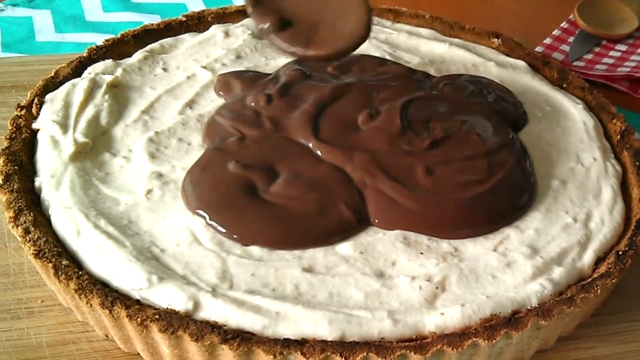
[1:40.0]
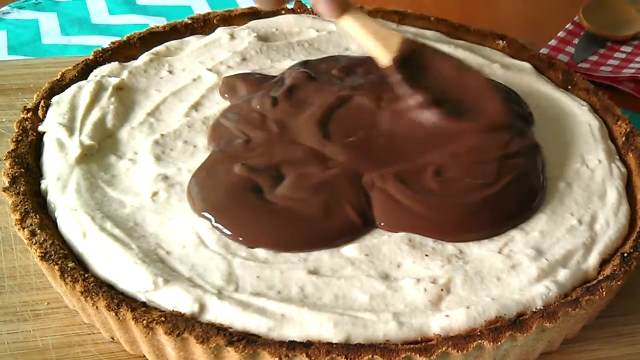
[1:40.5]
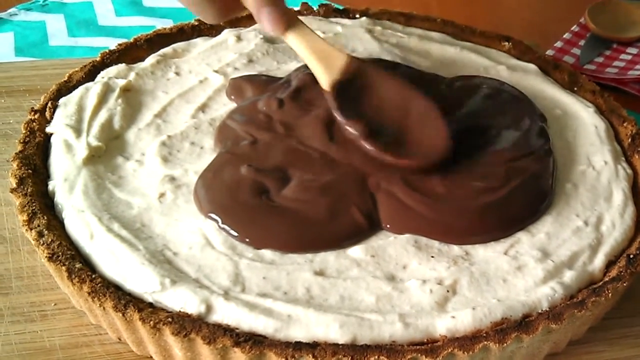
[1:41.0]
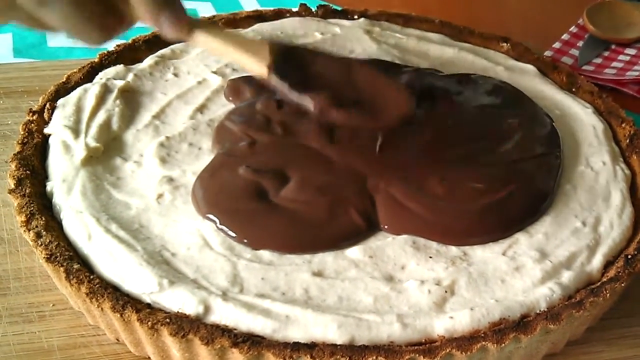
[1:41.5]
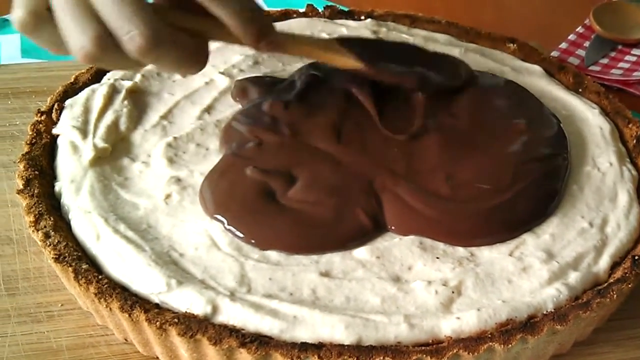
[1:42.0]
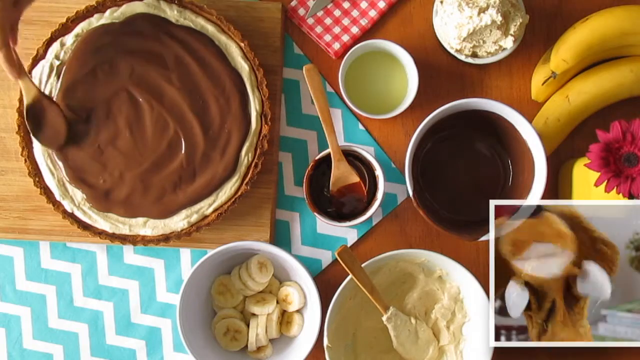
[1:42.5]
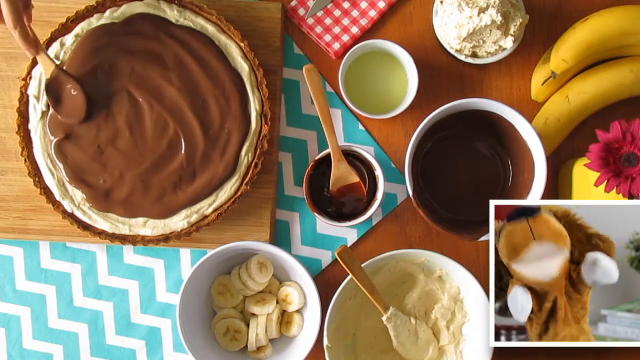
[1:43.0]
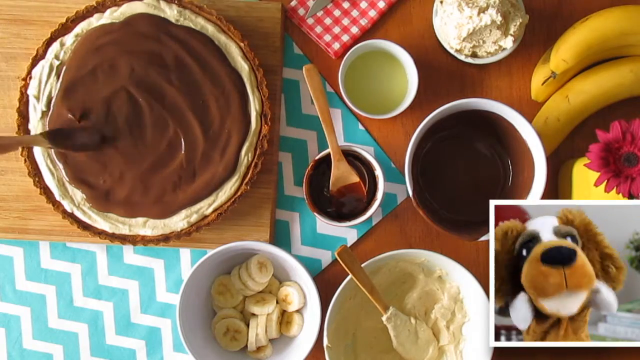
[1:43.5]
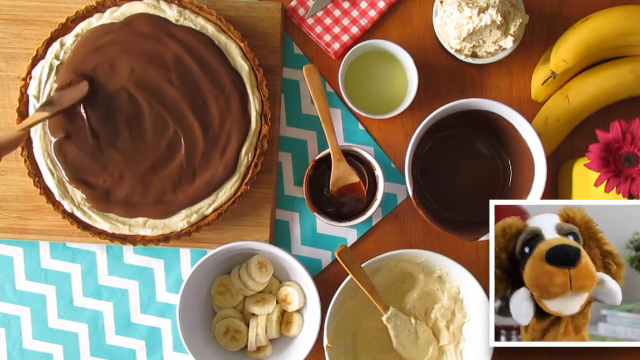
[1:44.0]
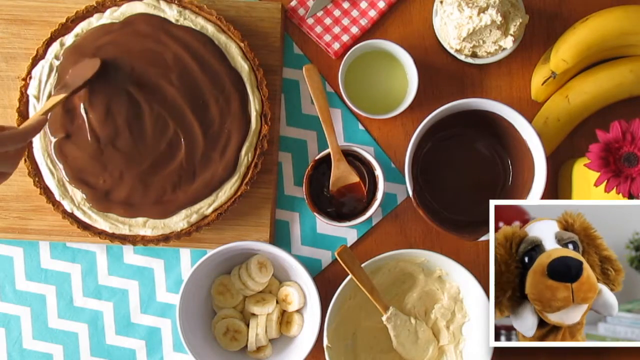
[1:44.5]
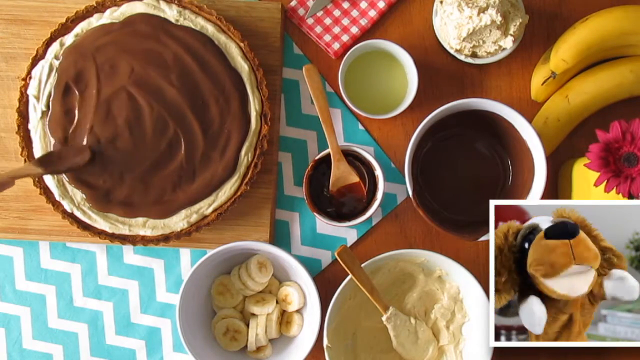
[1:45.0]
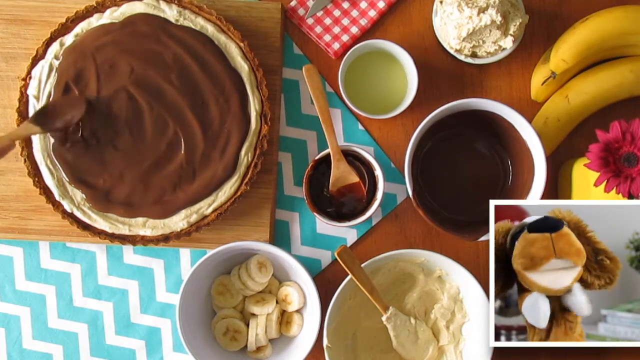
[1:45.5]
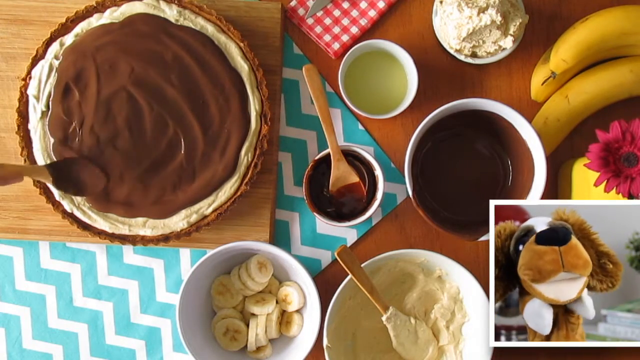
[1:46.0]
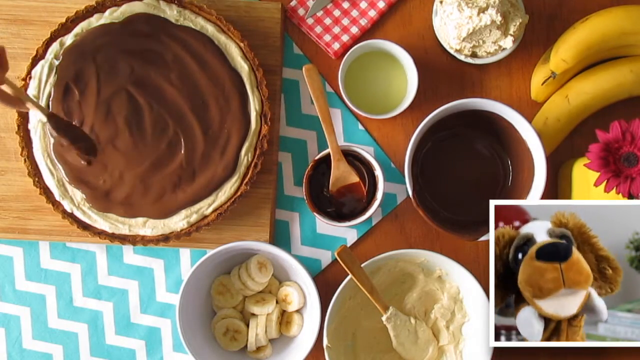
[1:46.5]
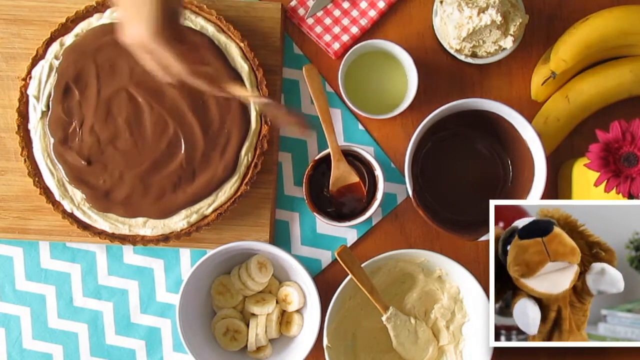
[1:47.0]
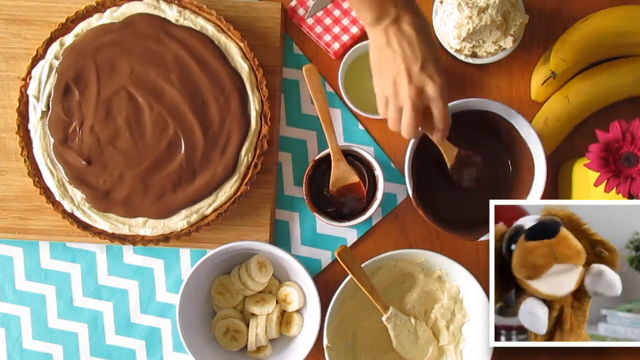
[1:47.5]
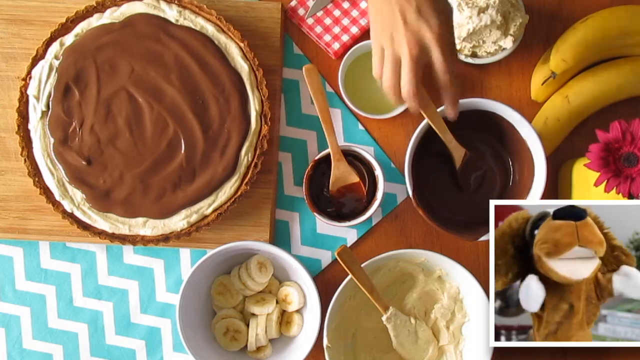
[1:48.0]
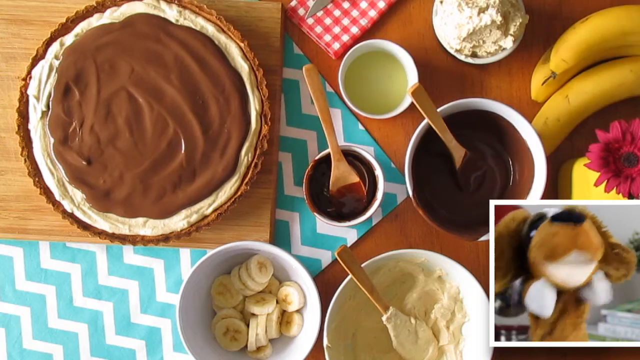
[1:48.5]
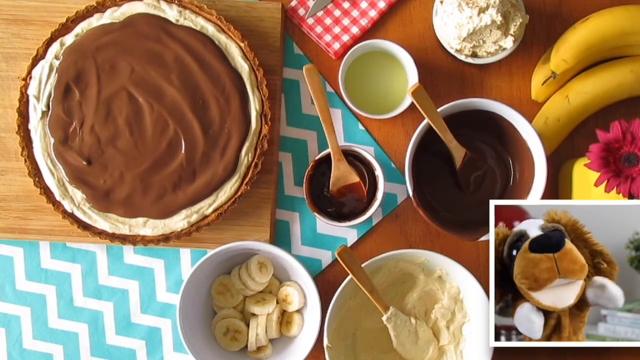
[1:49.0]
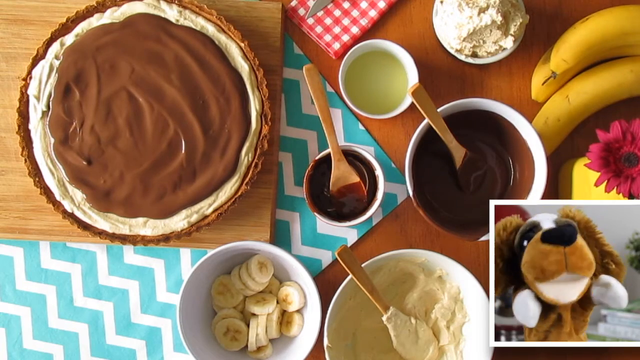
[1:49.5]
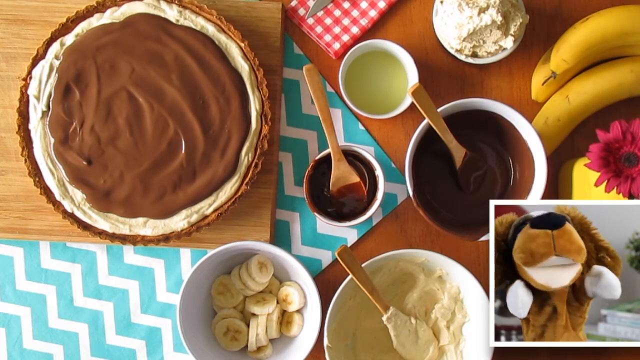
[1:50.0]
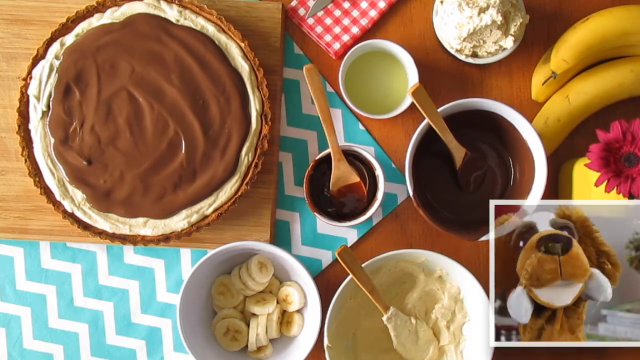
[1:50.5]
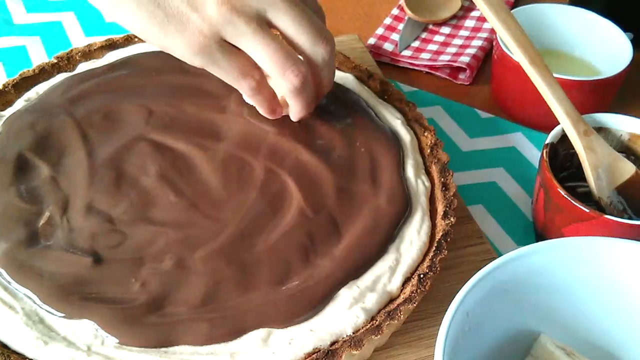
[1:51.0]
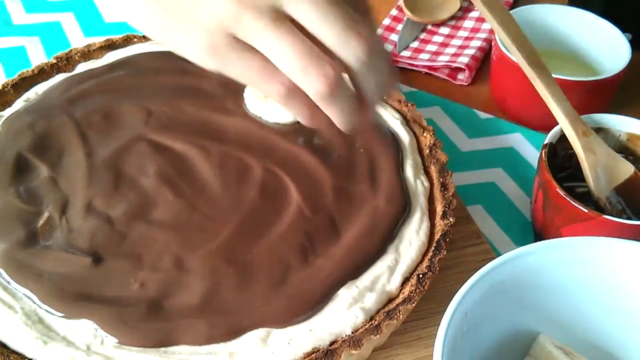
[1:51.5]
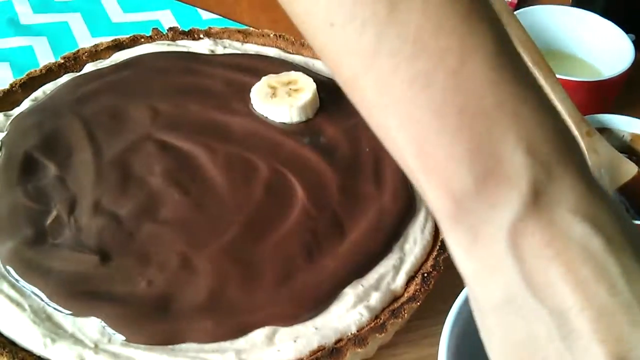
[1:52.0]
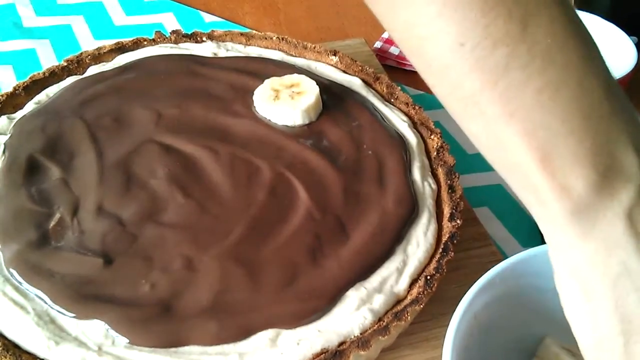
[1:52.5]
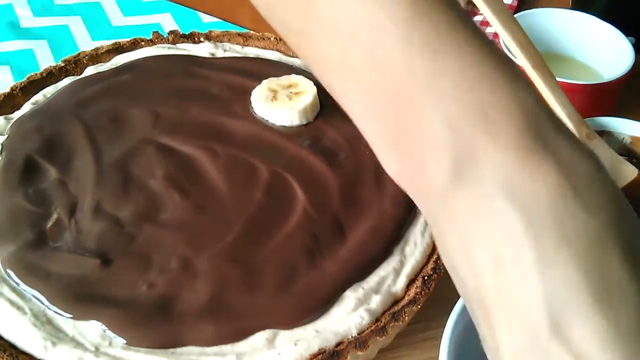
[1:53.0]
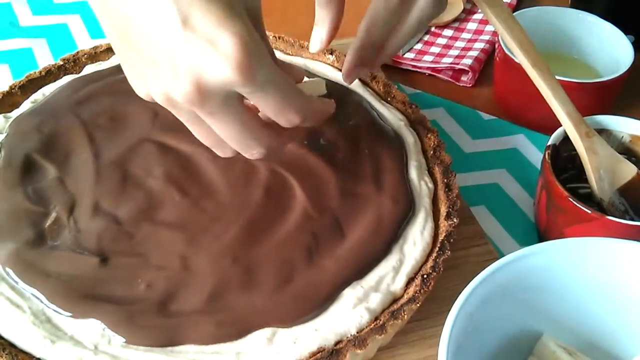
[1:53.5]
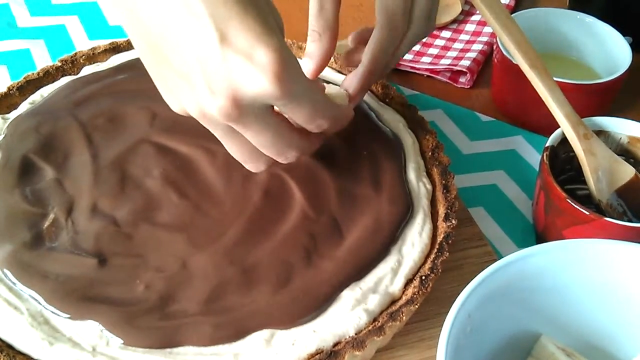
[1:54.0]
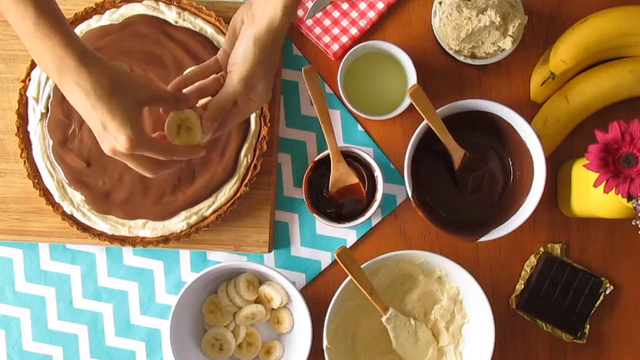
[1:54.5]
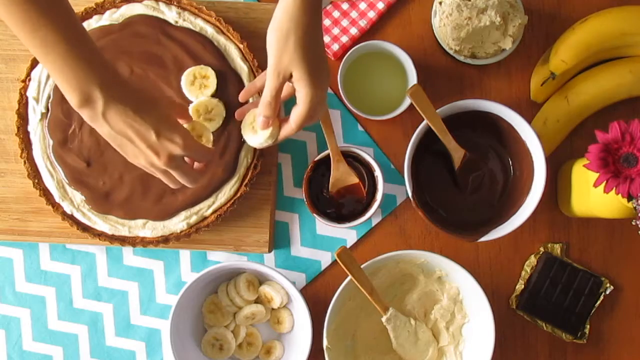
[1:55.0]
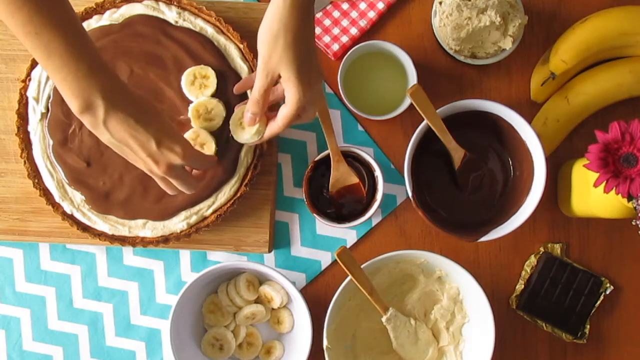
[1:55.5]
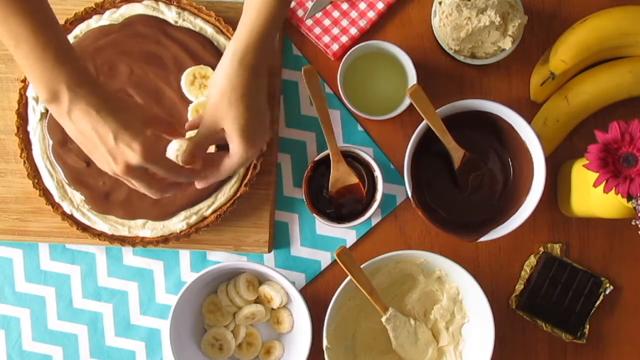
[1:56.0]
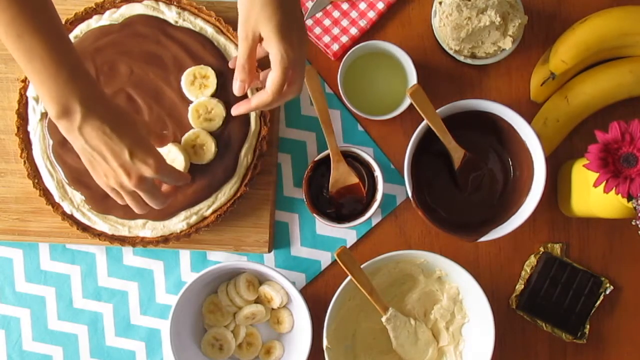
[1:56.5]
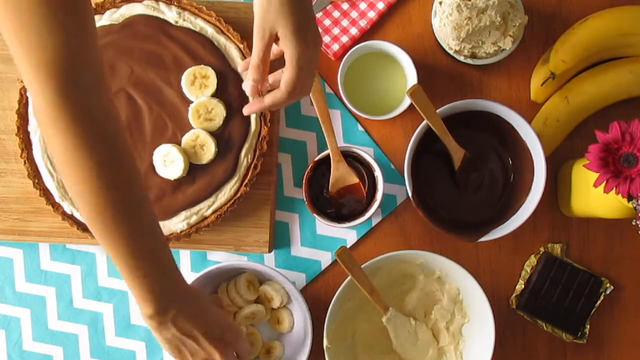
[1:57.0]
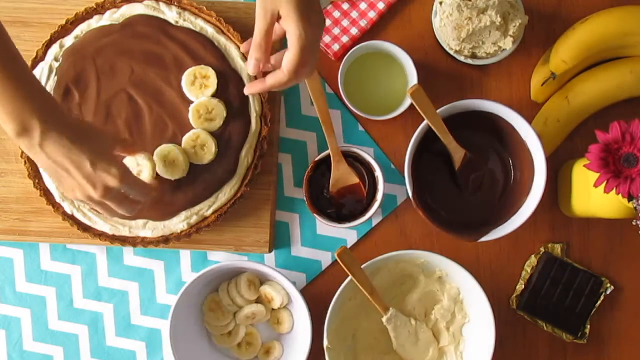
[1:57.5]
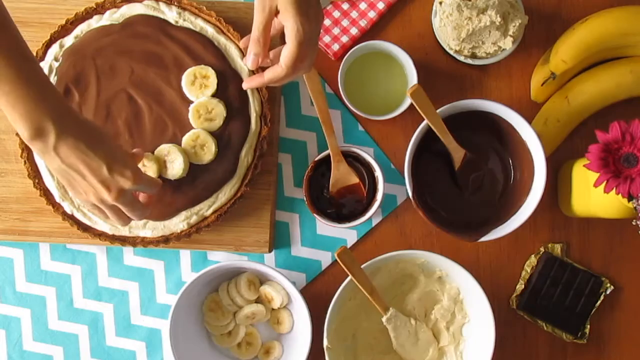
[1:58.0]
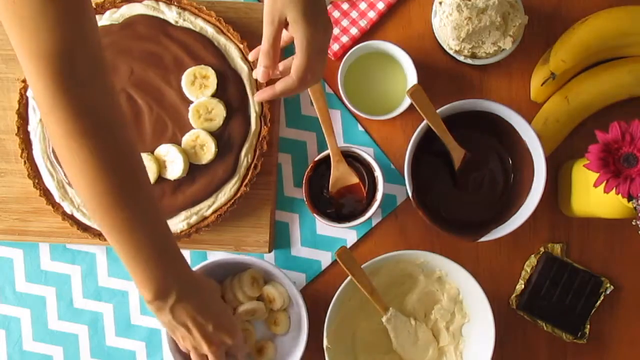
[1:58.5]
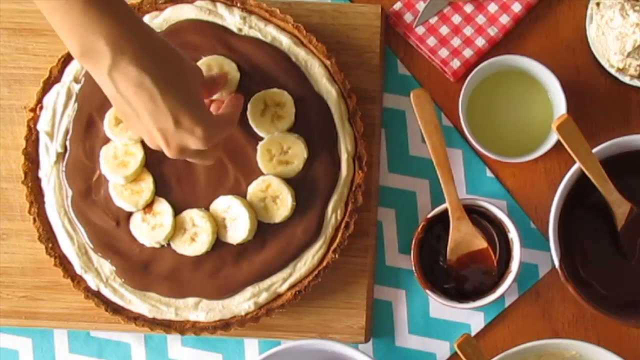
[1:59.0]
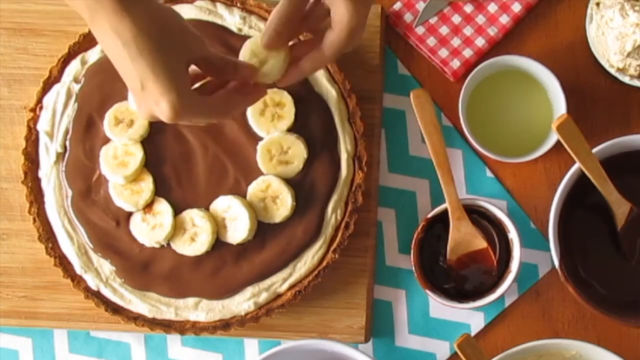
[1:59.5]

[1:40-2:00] A side shot shows the wooden chopping board sitting on top of the tablecloth with the pie sitting on the board. The base of the pie, the whipped double cream and the chocolate ganache are visible, and the ganache is being spread with the back of a wooden spoon. The video cuts to a top view of the pie with the other ingredients to the right-hand side: some chopped banana, some spare double cream, some chocolate, three full bananas, a pink gerbera flower and what looks like egg white in a bowl. The red and white gingham napkin and the blue and white waved tablecloth are visible. In the bottom right-hand corner the dog puppet is back, and the hand places the wooden spoon back into the chocolate ganache bowl. The video then cuts to a side view of the pie where someone's hand places more banana slices side by side on top of the chocolate ganache in a circle.